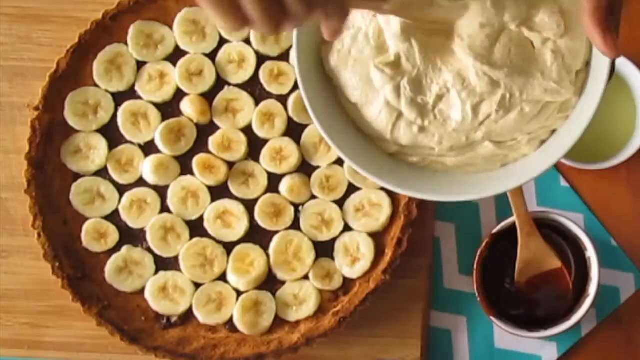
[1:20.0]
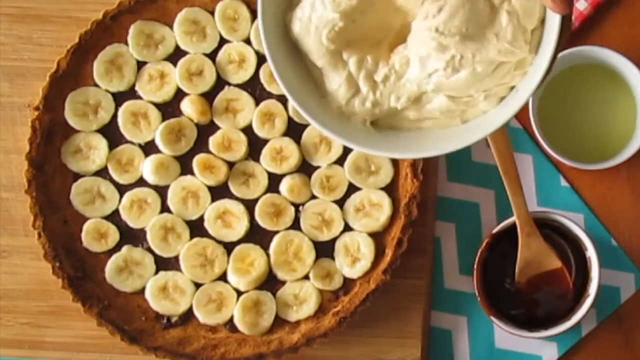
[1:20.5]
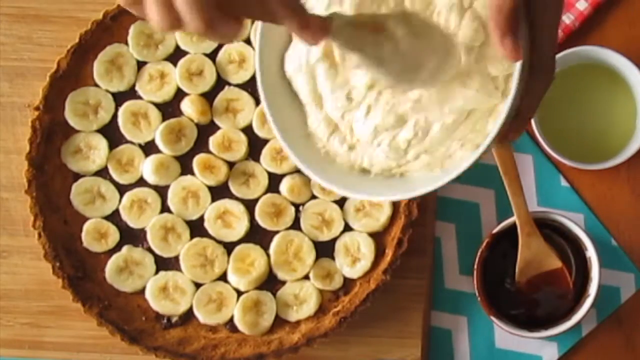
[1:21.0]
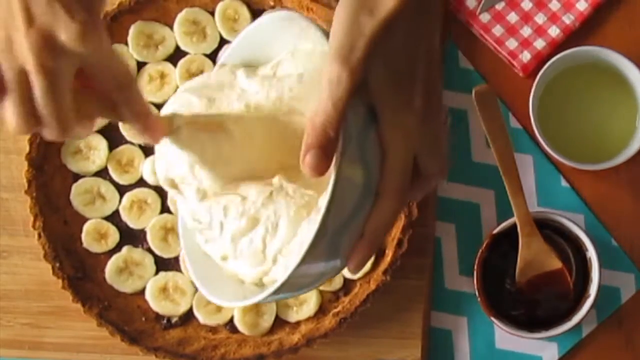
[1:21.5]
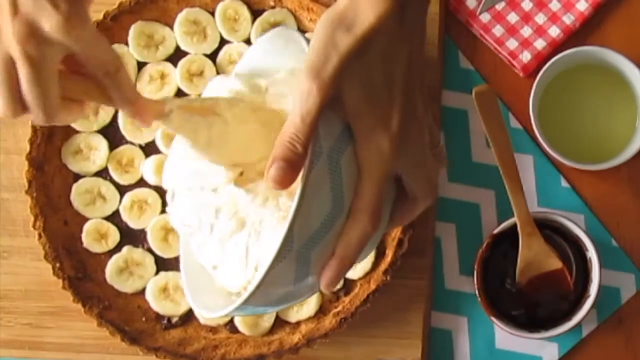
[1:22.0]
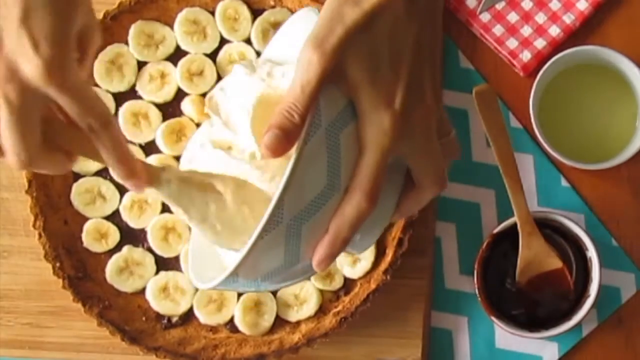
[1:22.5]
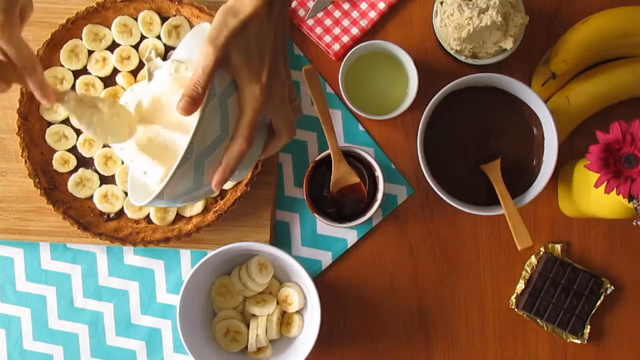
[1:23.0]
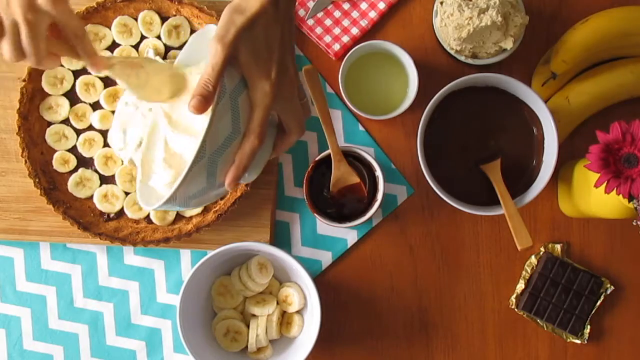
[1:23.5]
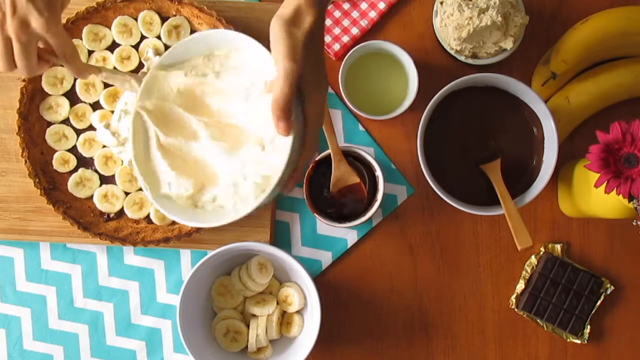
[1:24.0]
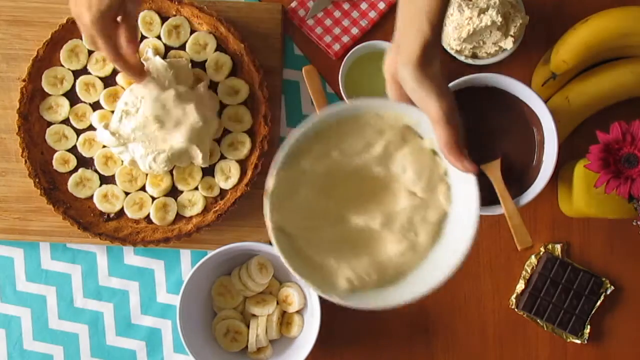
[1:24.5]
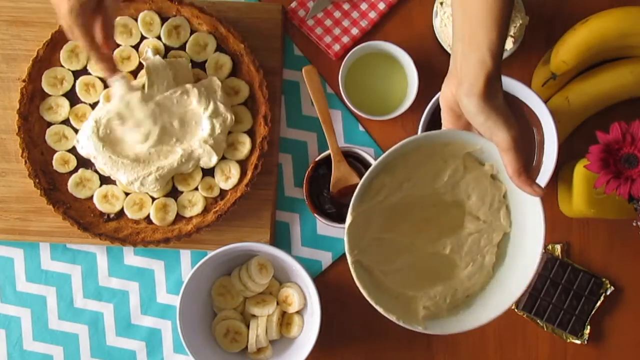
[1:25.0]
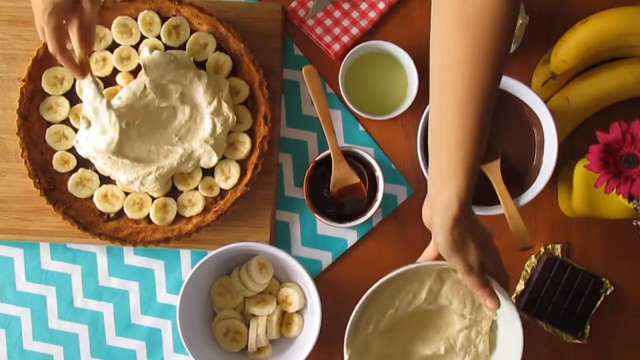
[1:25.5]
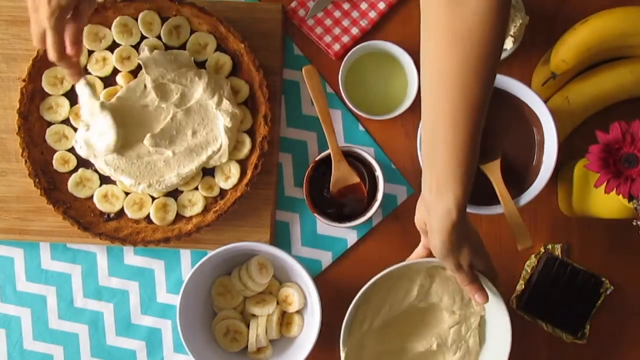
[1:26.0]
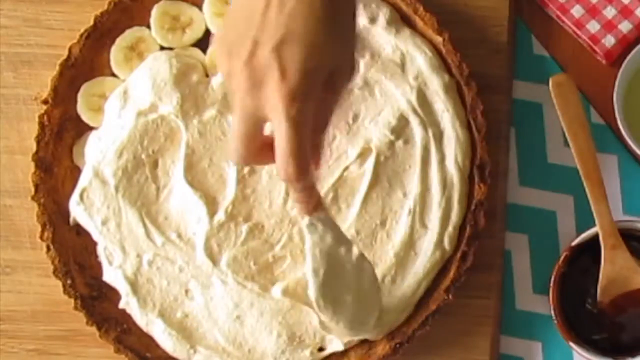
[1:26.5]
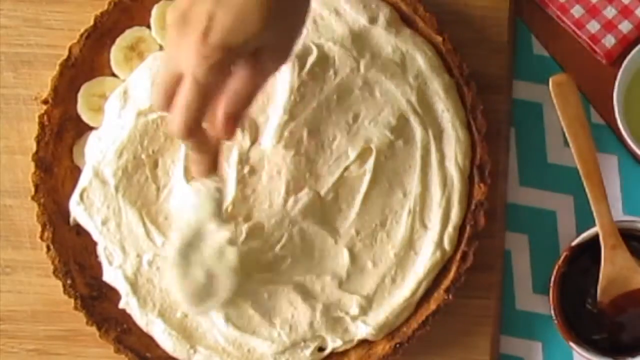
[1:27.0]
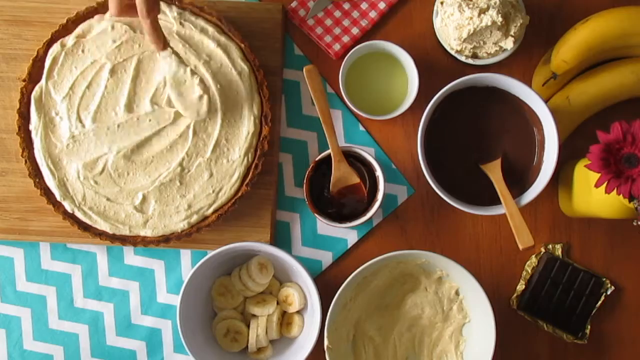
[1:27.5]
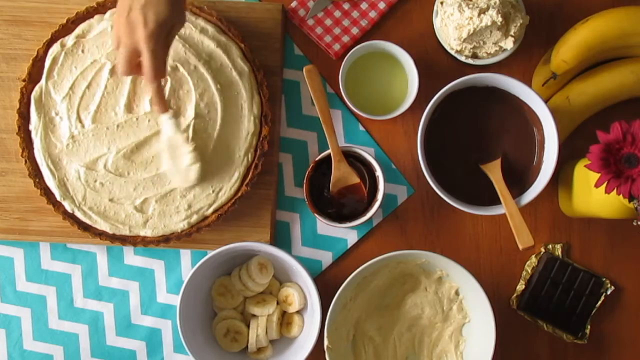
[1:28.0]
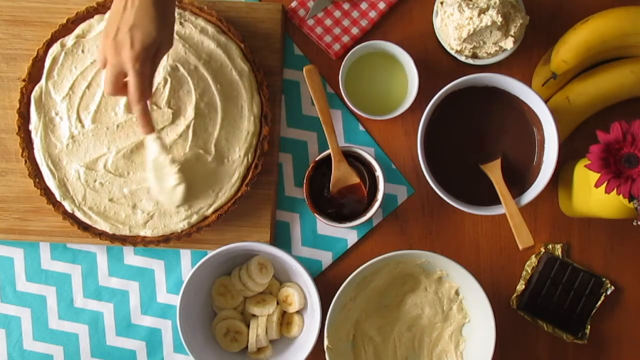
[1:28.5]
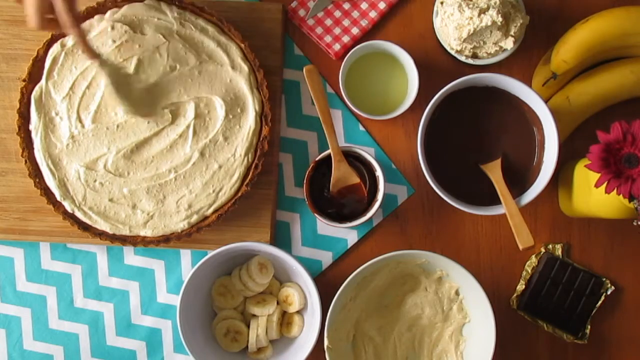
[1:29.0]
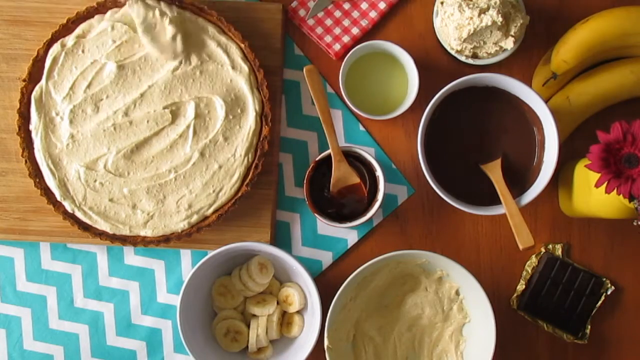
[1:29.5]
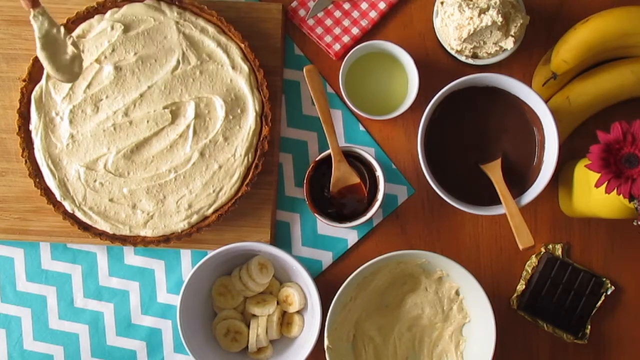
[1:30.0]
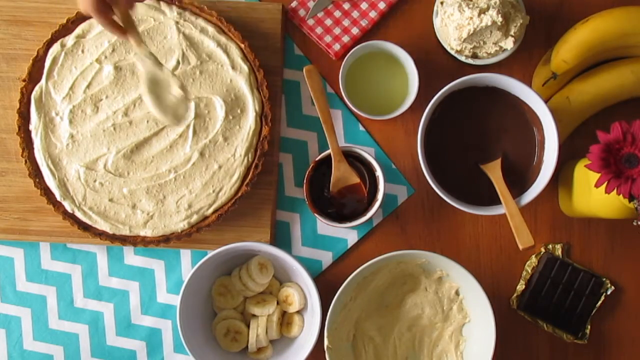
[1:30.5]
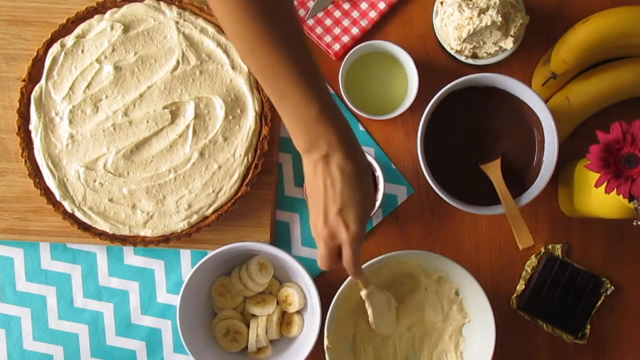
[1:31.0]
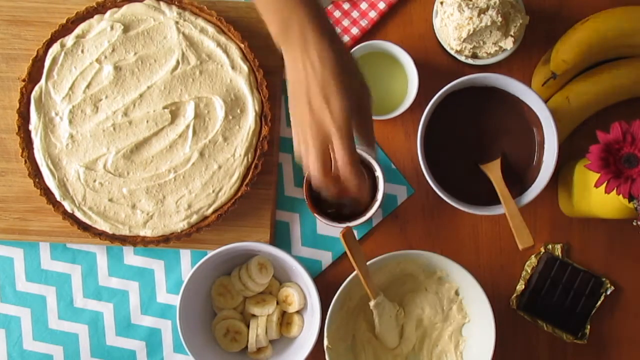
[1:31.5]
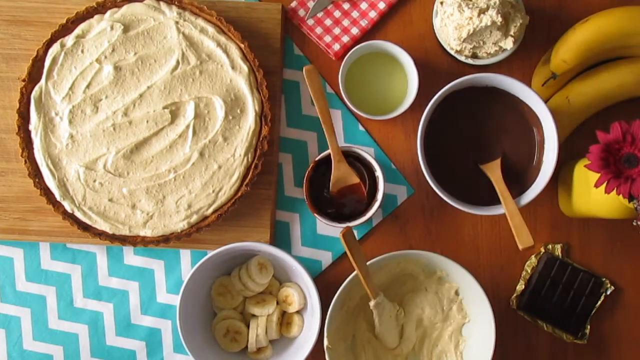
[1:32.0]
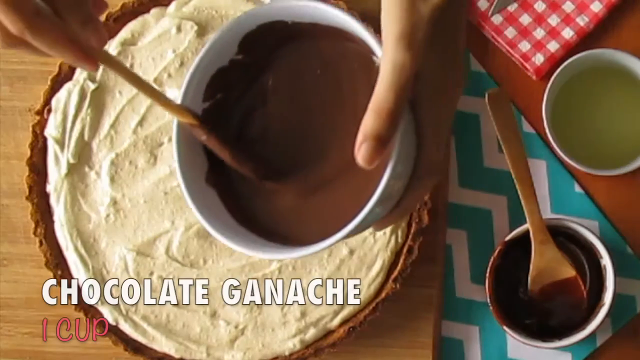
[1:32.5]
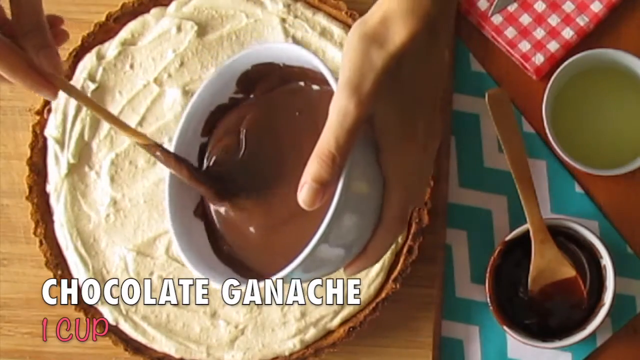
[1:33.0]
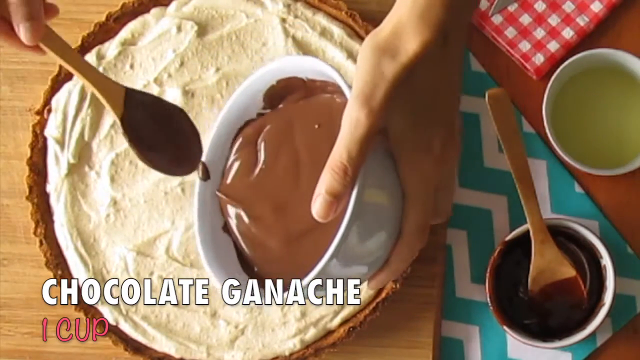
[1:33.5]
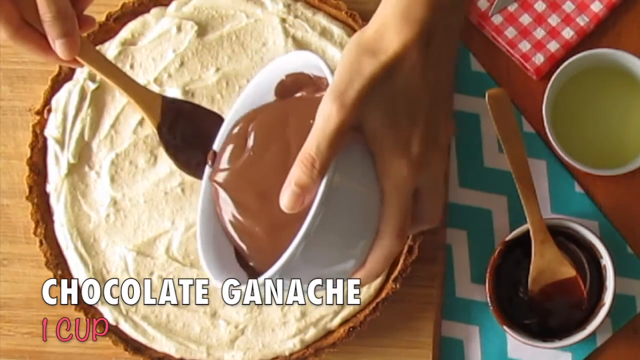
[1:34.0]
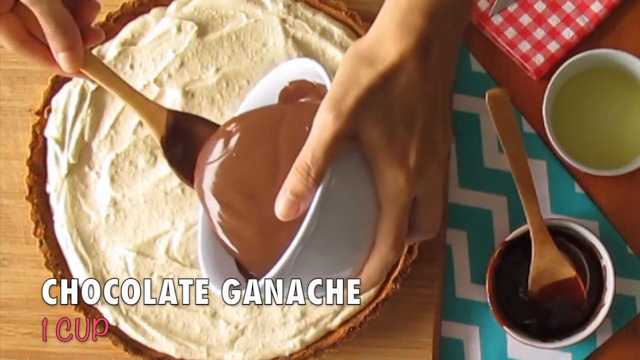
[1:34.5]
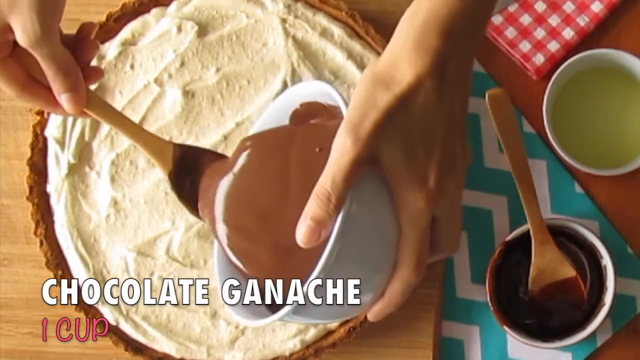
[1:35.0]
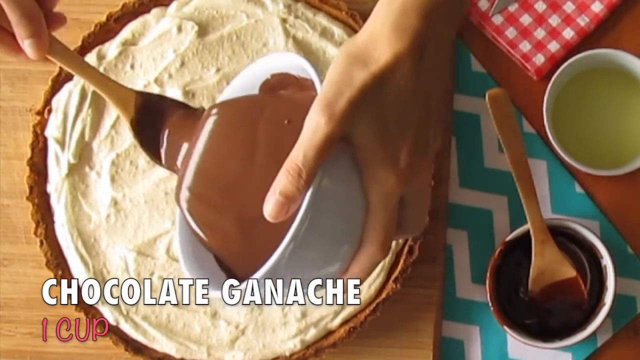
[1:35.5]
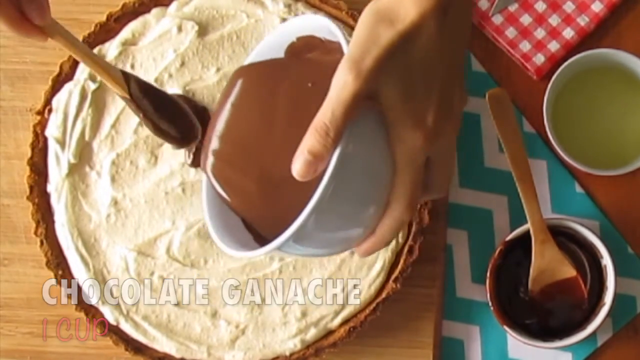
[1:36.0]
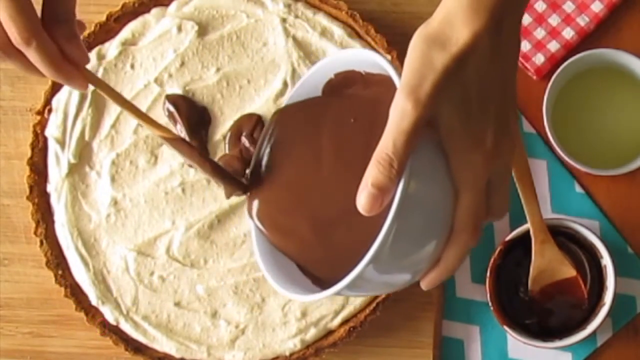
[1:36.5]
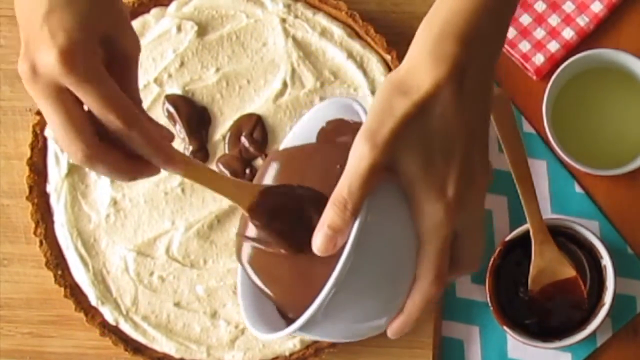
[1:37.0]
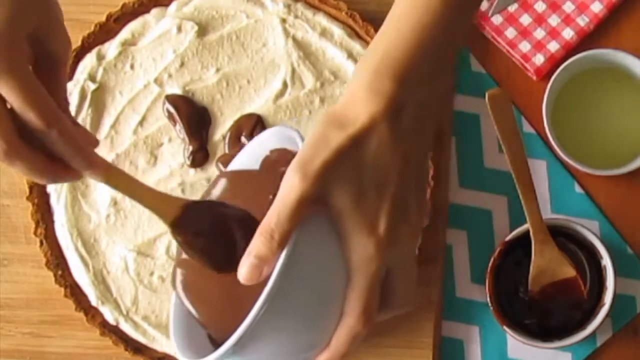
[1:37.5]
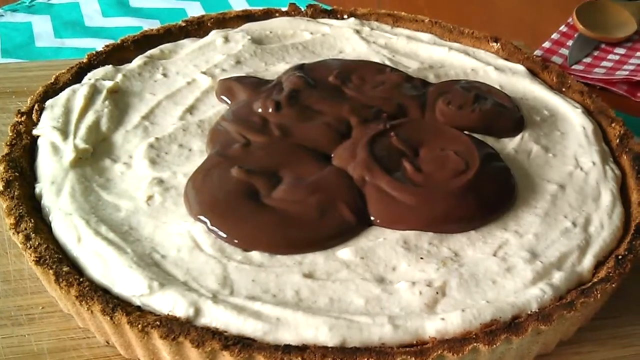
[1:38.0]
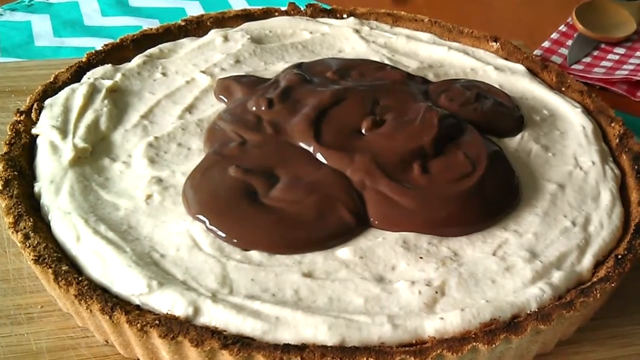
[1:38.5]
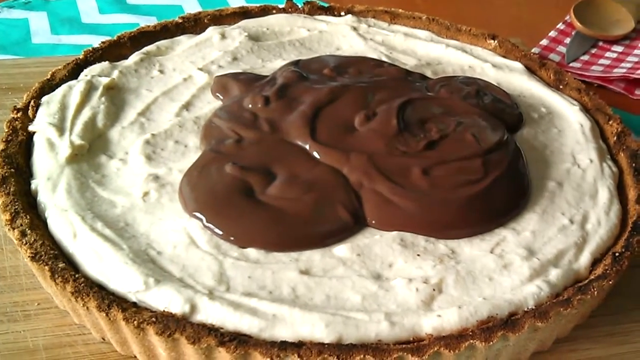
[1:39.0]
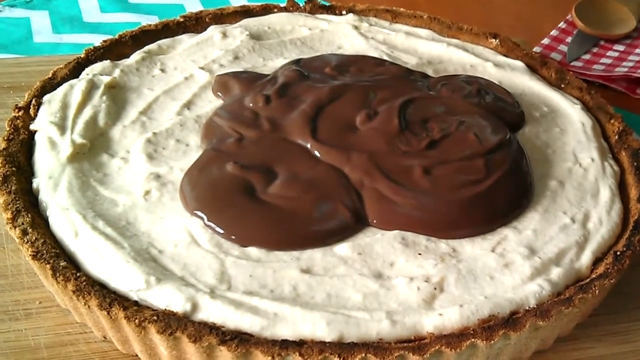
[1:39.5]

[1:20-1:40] A wooden table has a blue and white waved tablecloth, some melted chocolate in a pot with a wooden spoon, and the base of a pie. The pie has melted dark chocolate with slices of banana on top filling the bottom. The hands bring over some whipped cream and put it on top of the bananas with the back of a wooden spoon, spreading it so there are no gaps and it looks neat. Next they empty chocolate ganache from a white bowl onto the whipped cream using a wooden spoon, while white on-screen text reads "chocolate ganache". Once it is emptied onto the pie, the video cuts to a closer shot from the side of the pie showing the chocolate in small heaps on top of the whipped cream.